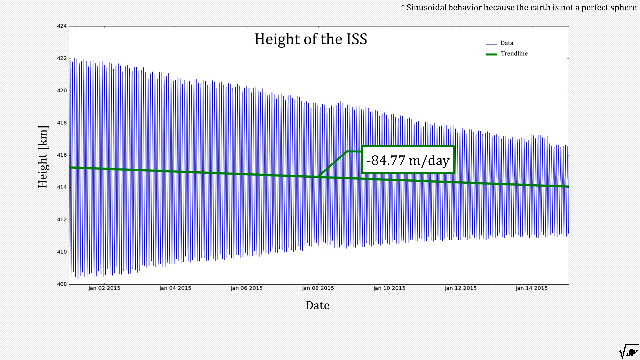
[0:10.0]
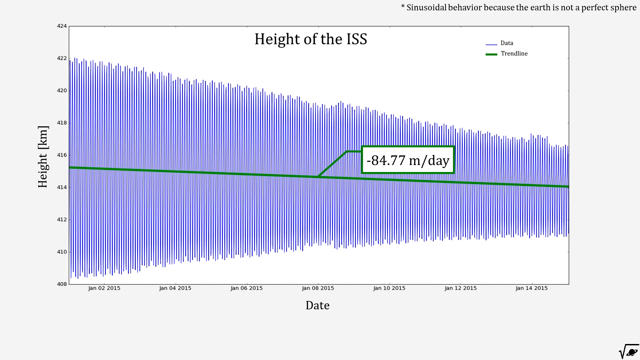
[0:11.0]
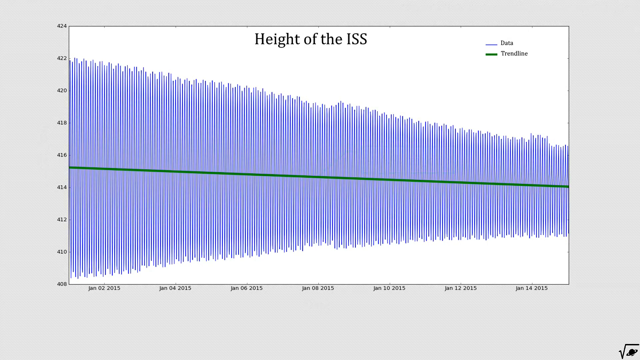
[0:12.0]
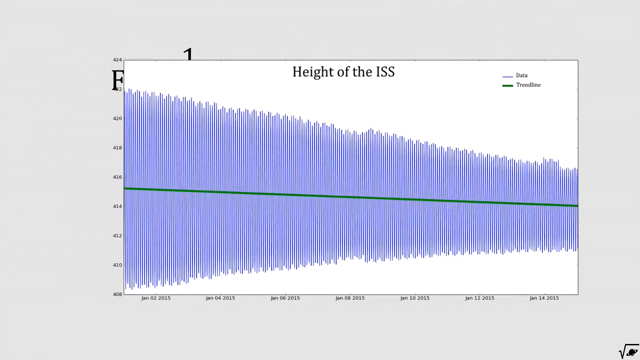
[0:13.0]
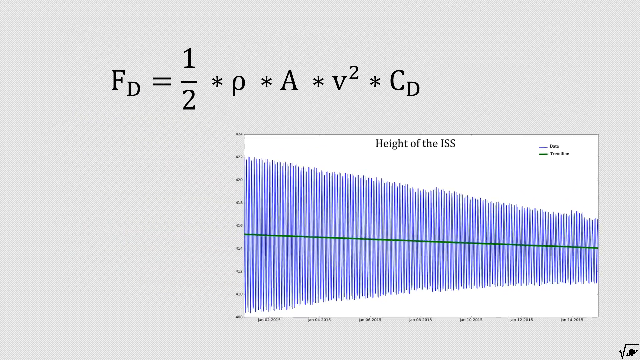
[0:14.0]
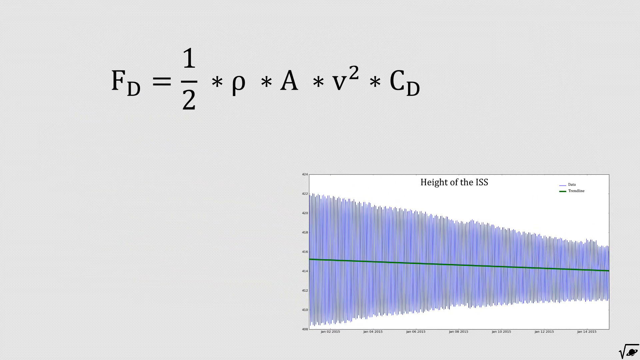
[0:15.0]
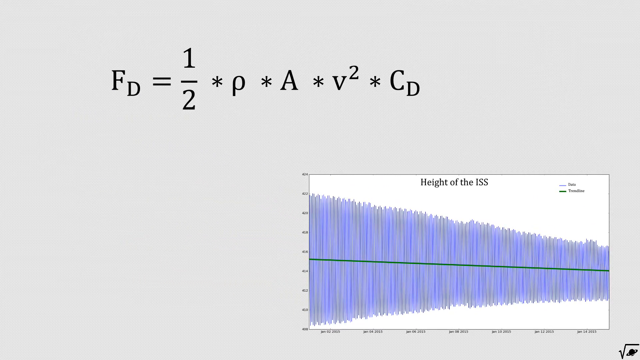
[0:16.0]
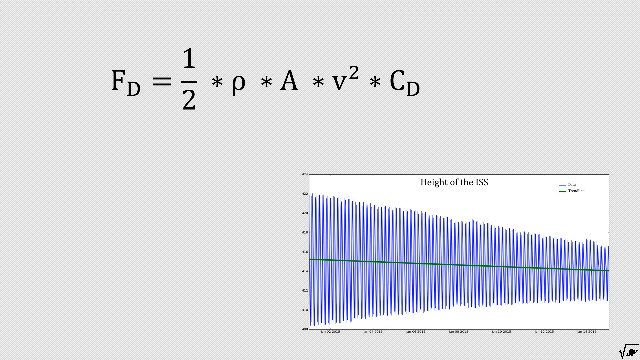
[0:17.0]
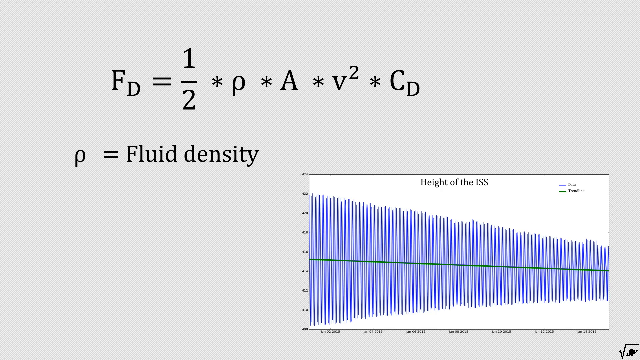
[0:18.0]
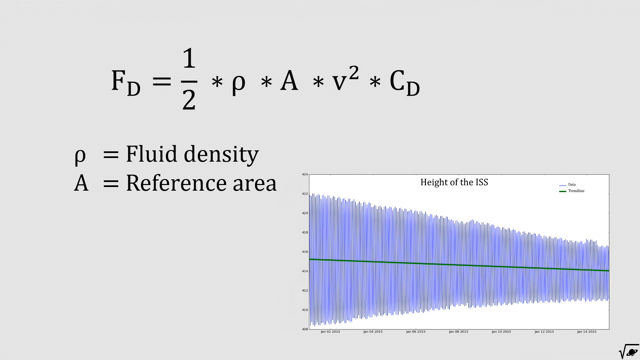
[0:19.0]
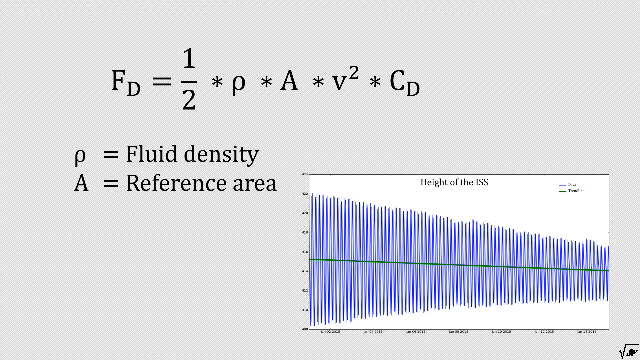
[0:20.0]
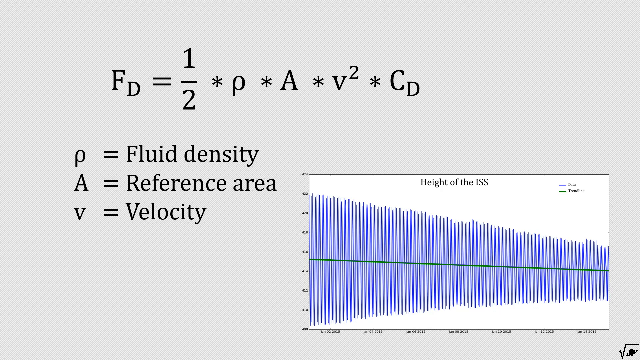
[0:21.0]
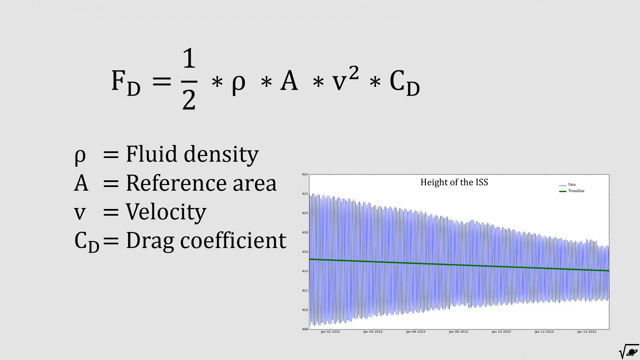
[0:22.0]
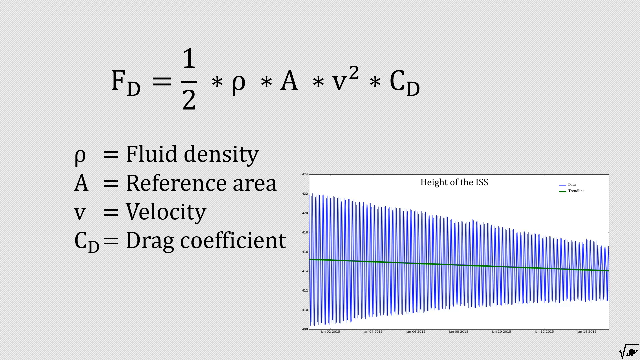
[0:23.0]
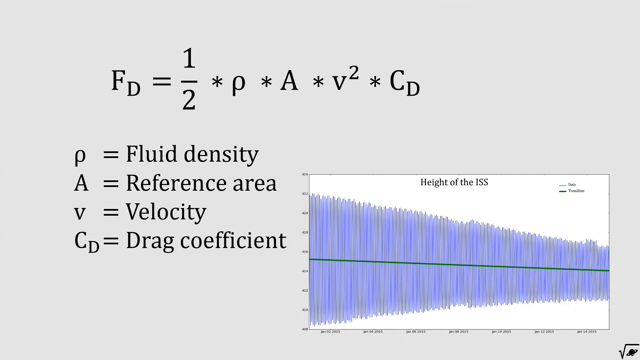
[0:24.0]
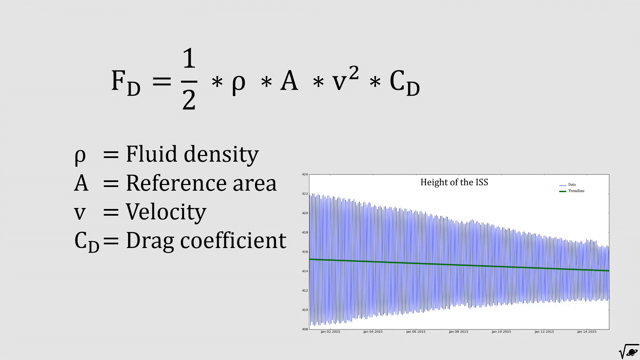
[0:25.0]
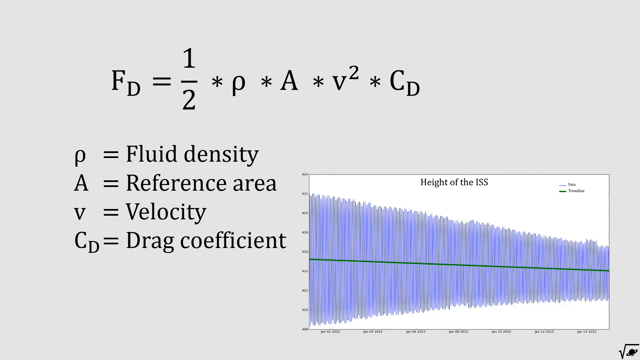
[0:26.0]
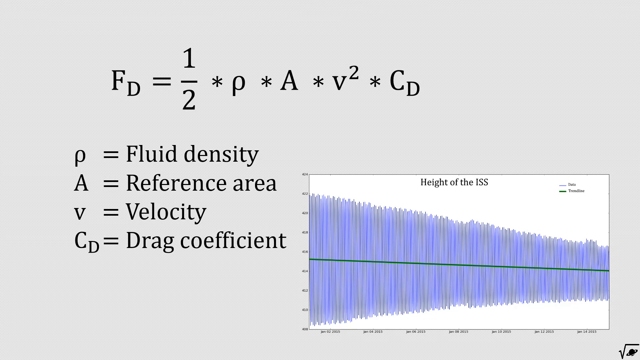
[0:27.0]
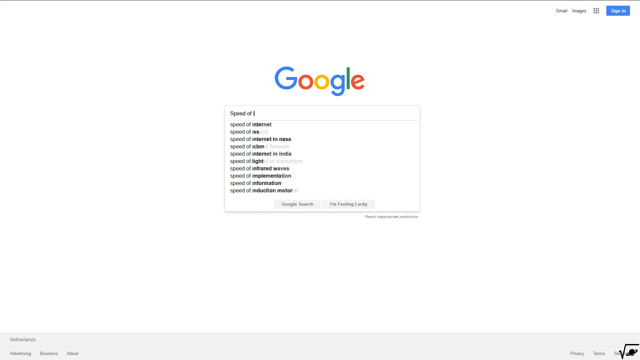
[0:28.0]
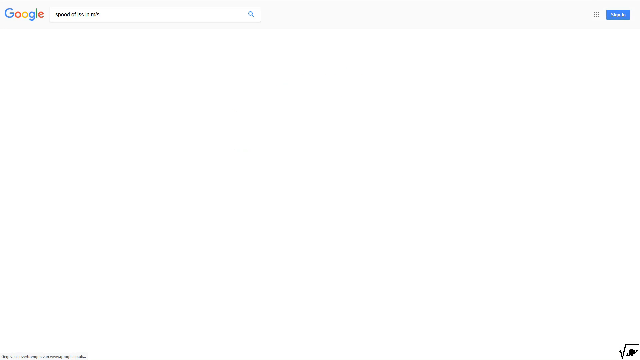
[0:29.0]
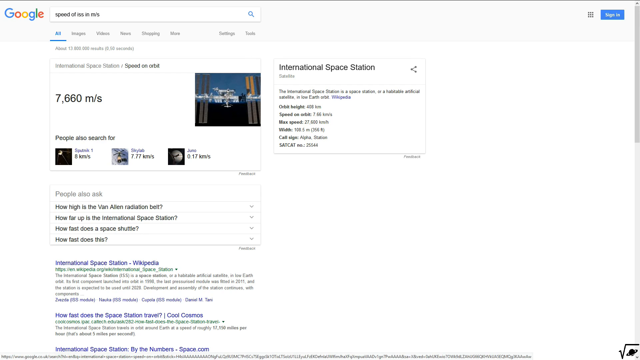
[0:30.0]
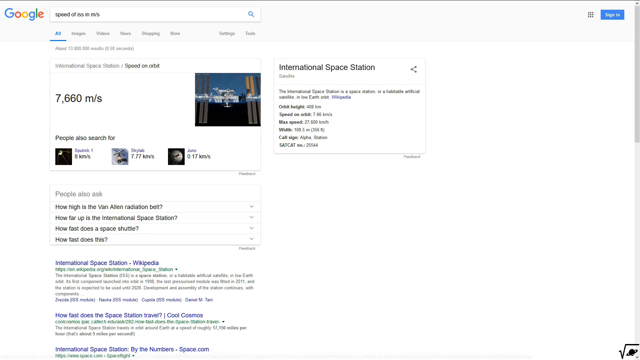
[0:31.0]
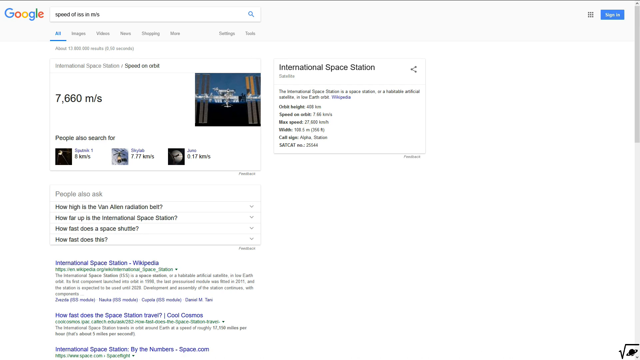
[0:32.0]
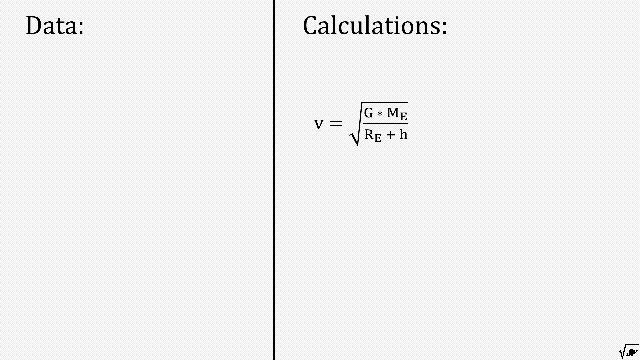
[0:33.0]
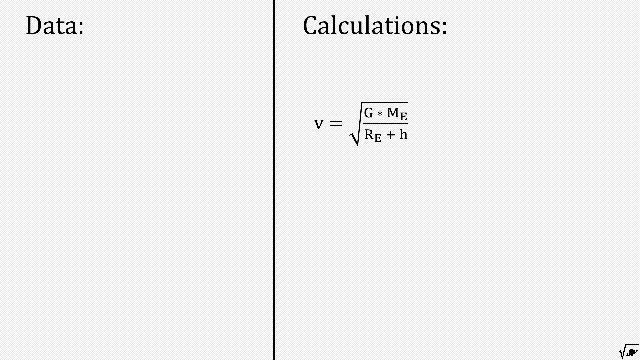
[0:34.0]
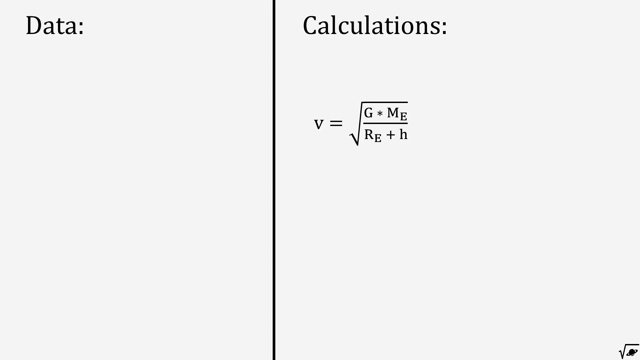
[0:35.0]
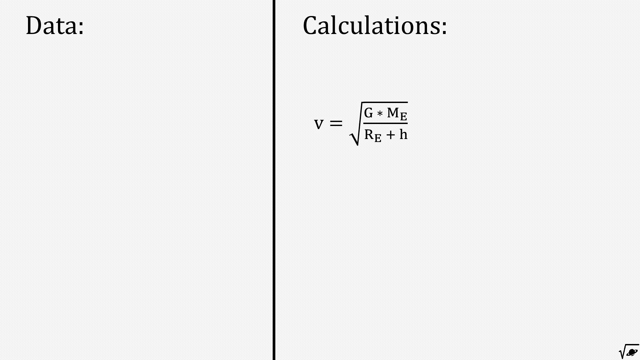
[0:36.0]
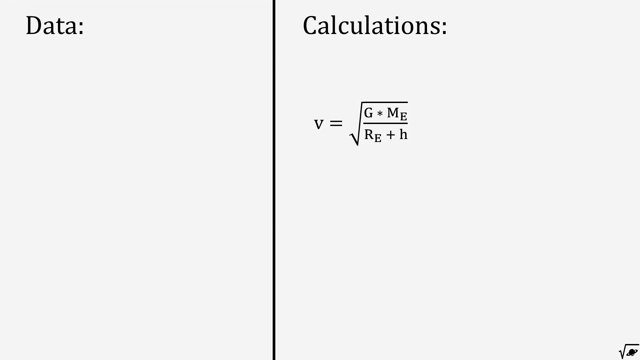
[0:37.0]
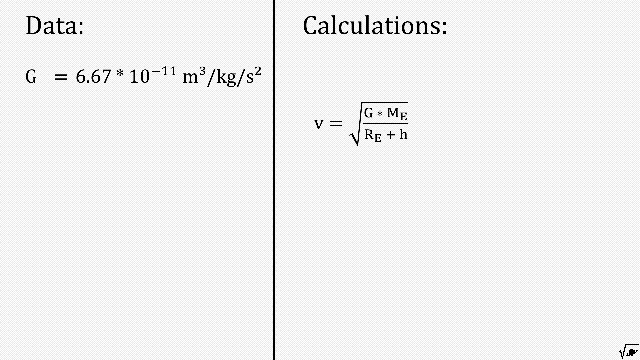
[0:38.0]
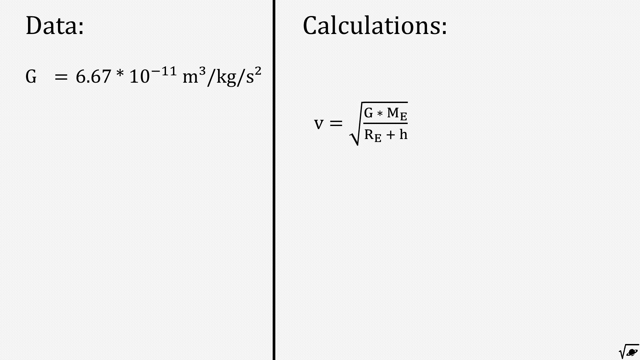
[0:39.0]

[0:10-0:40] The chart continues, with the text "SINUSOIDAL behavior because the earth is not a perfect sphere". There is a big rectangular box titled "height of ISS" with a color key. A green line going horizontally is the trend line. The y-axis is labeled "height", and the x-axis is labeled with the date, January 2015, possibly January 2nd. A value of minus 84.77 a day is shown. The chart then gets smaller toward the right-hand side, and a formula pops up in black font: FD = 1/2 * P * A * V² * CD, with the definitions "P = fluid density", "A = reference area", "V = velocity" and "CD = drag coefficient". Next comes a Google search in which someone appears to type "speed of ISS", and the result reads "7,660 m/s"; this value is apparently put into the data and calculations.